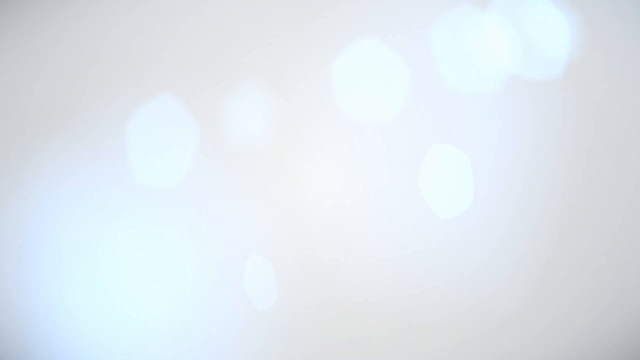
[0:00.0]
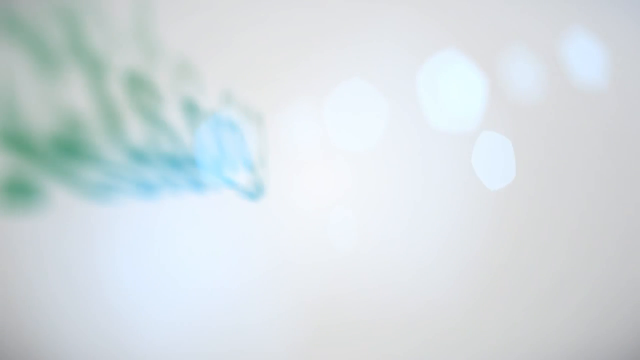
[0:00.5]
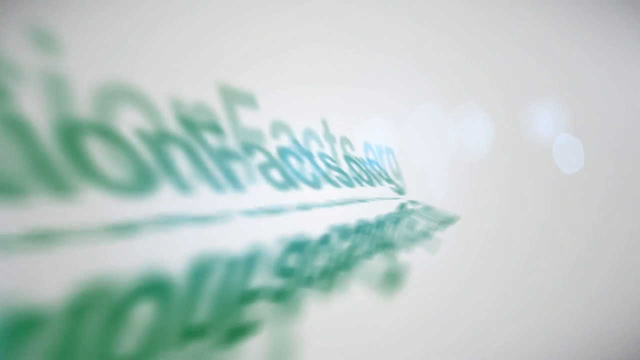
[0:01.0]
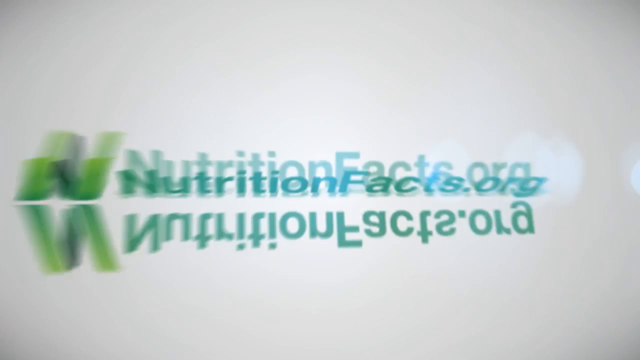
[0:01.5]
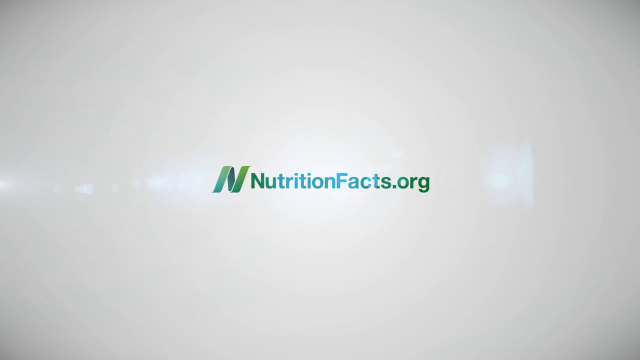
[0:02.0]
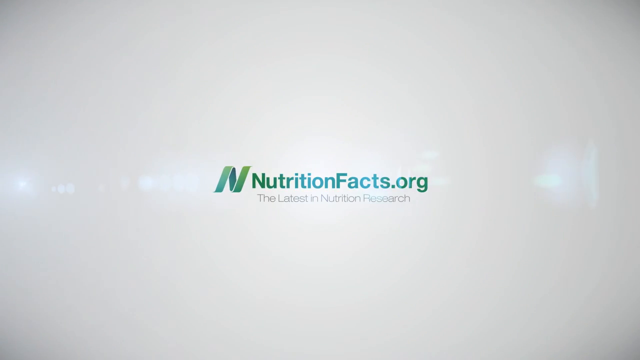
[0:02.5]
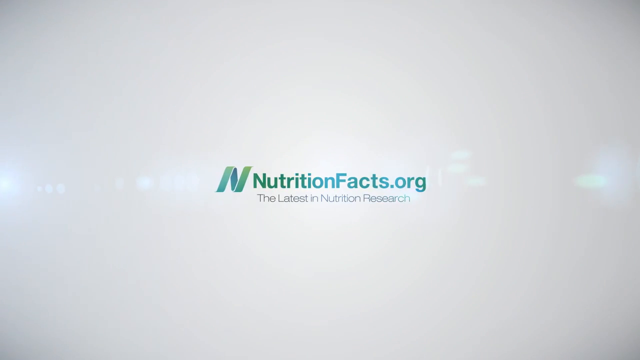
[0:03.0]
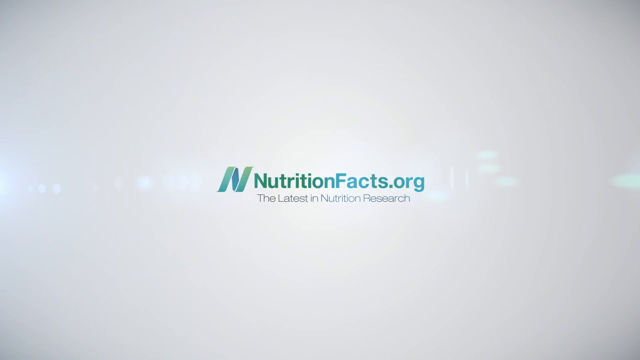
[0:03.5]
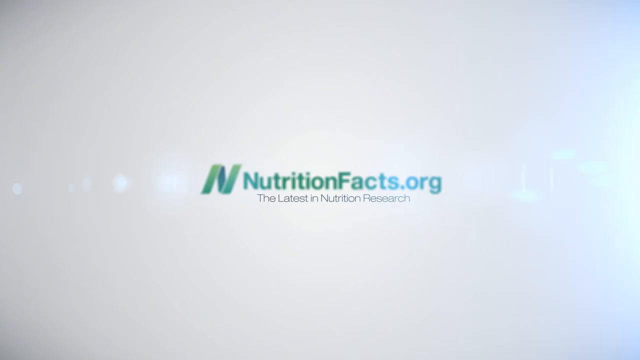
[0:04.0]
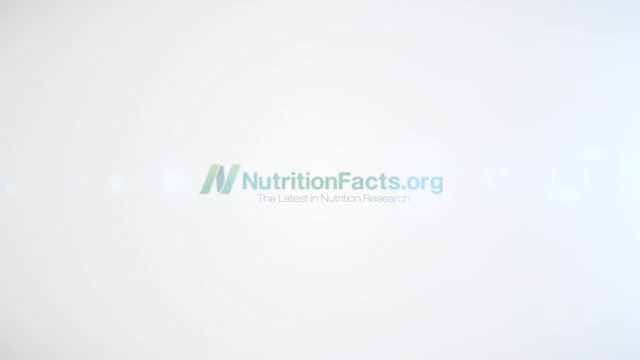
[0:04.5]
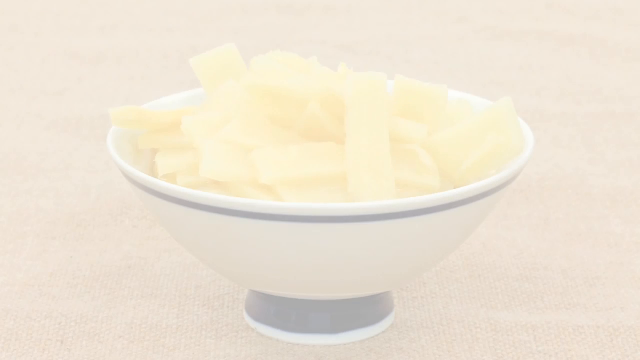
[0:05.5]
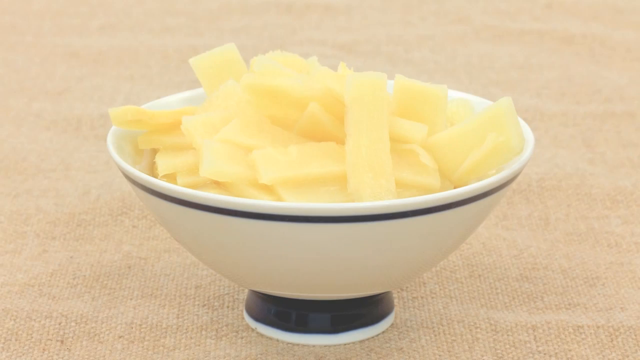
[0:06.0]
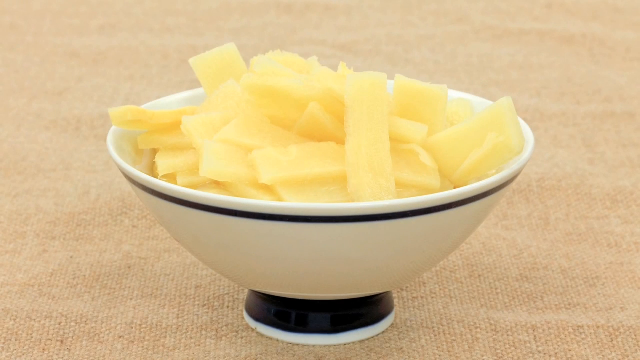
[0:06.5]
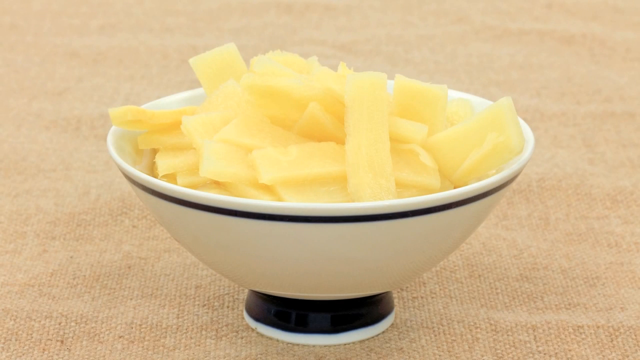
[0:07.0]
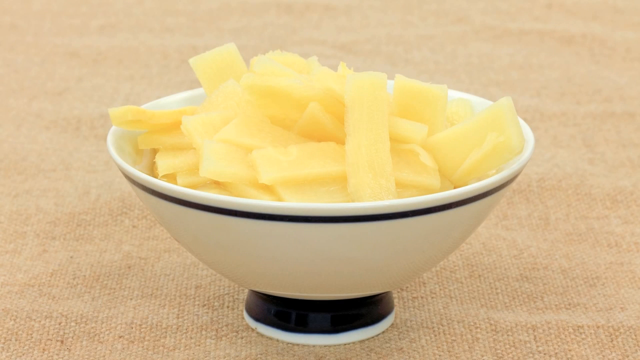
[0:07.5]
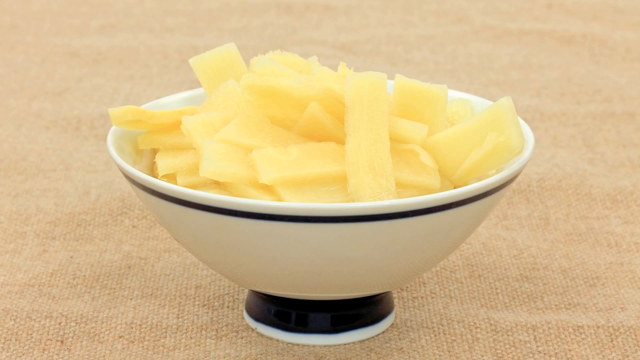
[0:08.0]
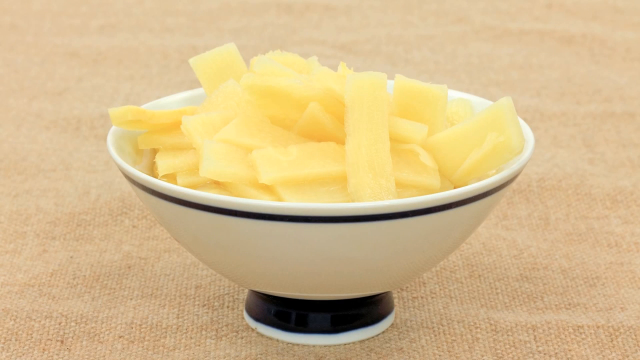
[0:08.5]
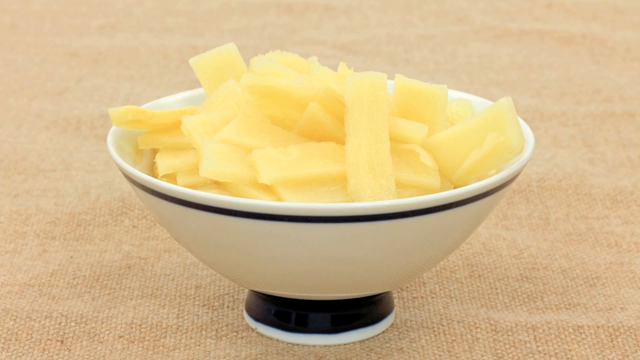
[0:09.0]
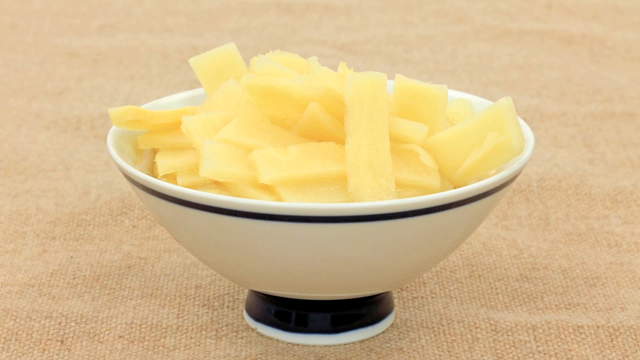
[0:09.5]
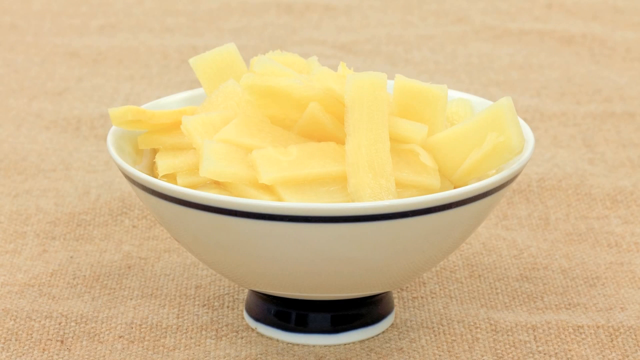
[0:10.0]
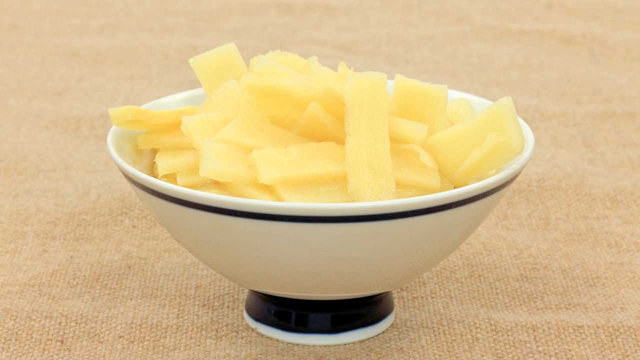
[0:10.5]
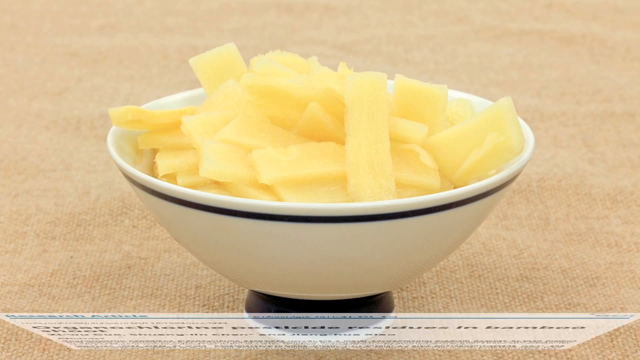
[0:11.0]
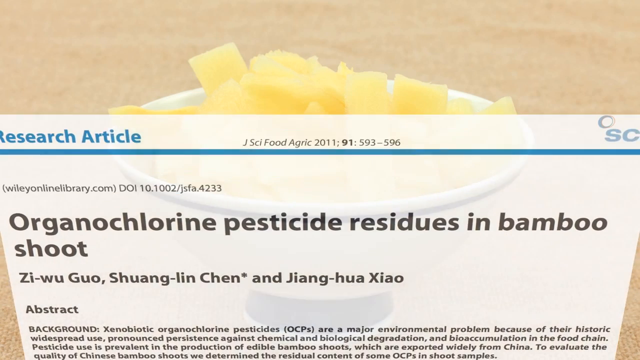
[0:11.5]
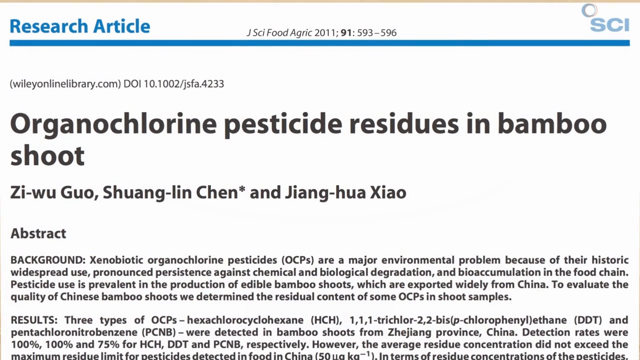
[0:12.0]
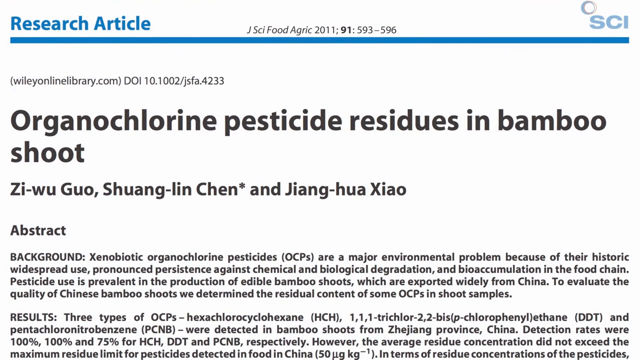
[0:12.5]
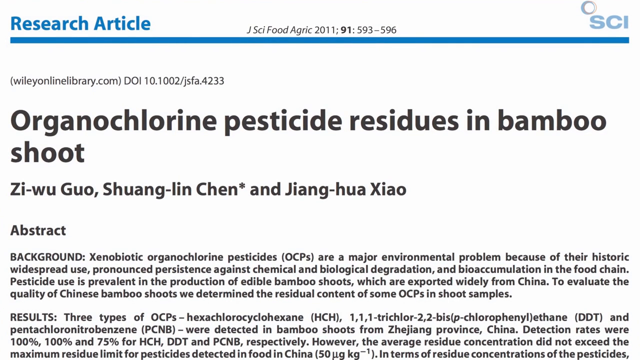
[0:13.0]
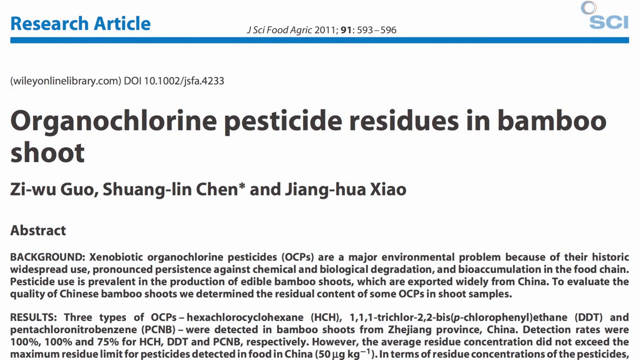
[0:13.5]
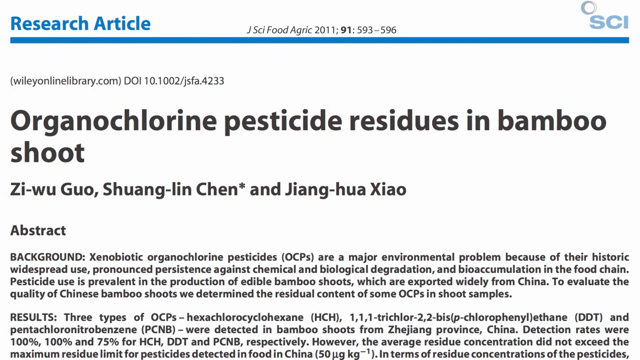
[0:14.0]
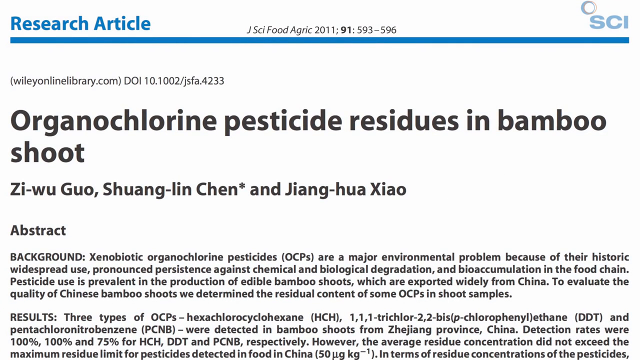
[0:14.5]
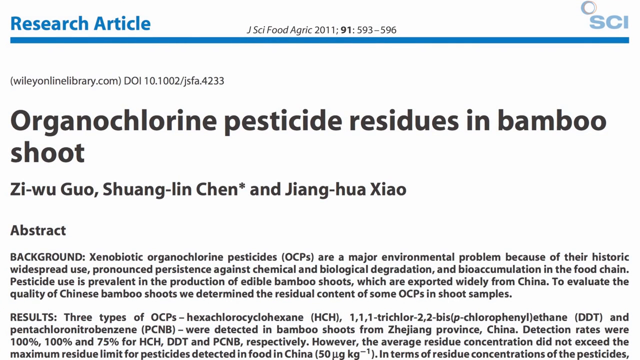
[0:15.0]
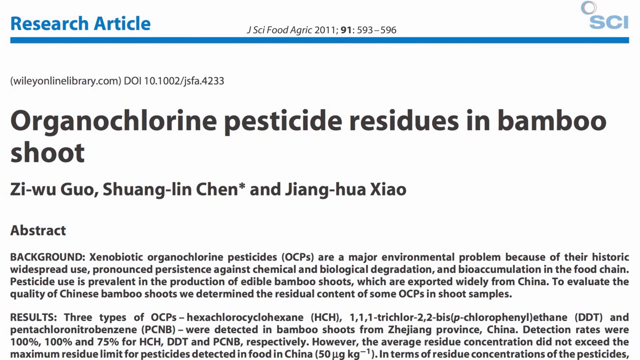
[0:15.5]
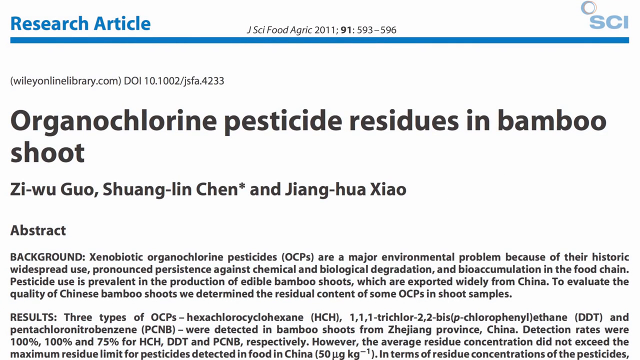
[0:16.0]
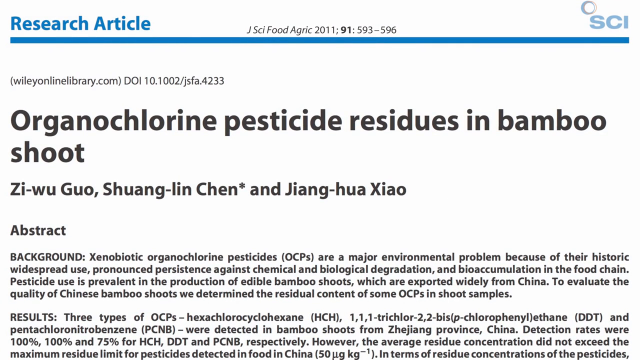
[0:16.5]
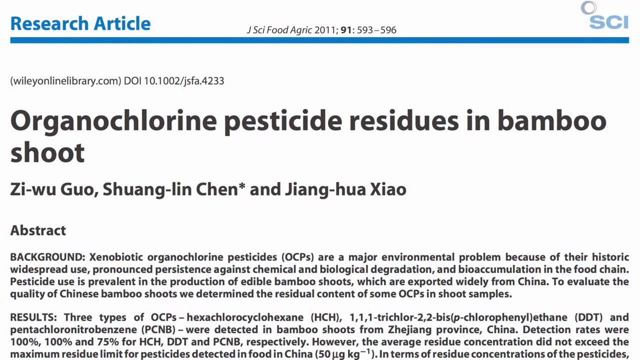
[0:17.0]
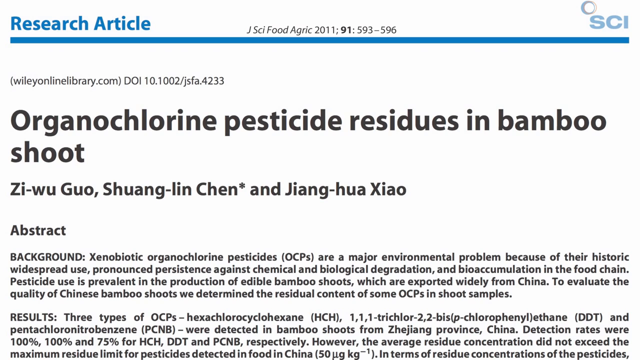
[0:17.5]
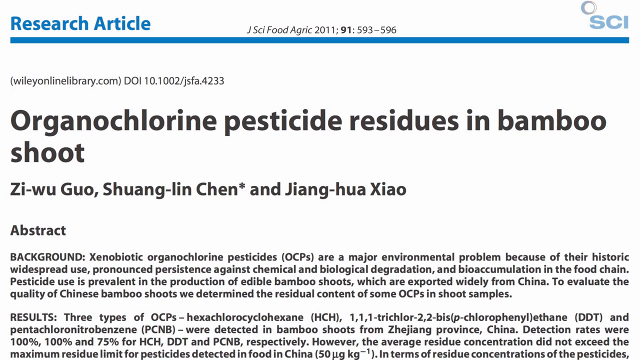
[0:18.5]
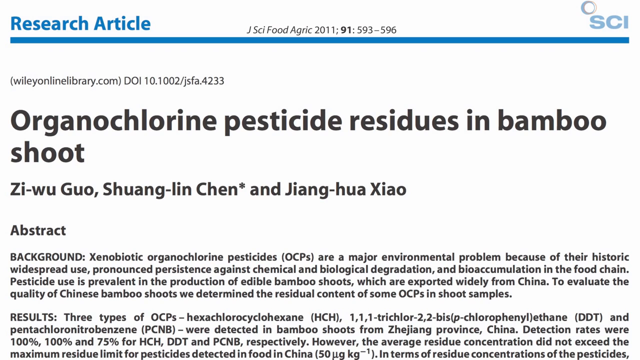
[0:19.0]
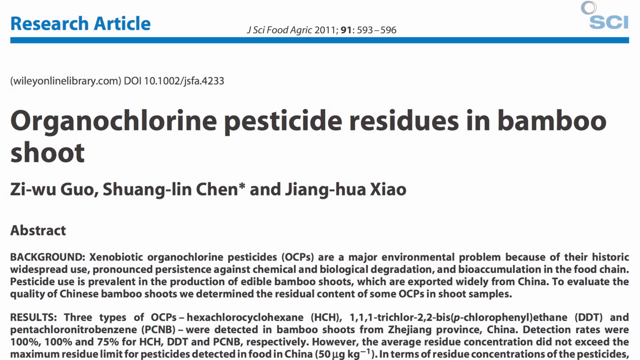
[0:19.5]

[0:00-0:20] The video opens with the company branding, showing it was produced by nutritionfacts.org: the name appears in green title case lettering, with an N logo that looks like a band of tape on the left-hand side. Underneath, in a standard black font, it says "the latest in nutrition research". The screen then changes to a bowl of bamboo shoots, rectangular in shape and pale yellow in colour. The bowl is white and oriental in style, with a navy line around its rim, and it is on a pale brown work surface. Next, the top of a research article is shown. "Research article" is in blue font, followed by a blue line, with a Cy logo in the right-hand corner. The publication date is in the middle, then the website address, then the bold black headline "organochlorine pesticide residues in bamboo shoot". A subheading lists the authors, followed by the abstract.